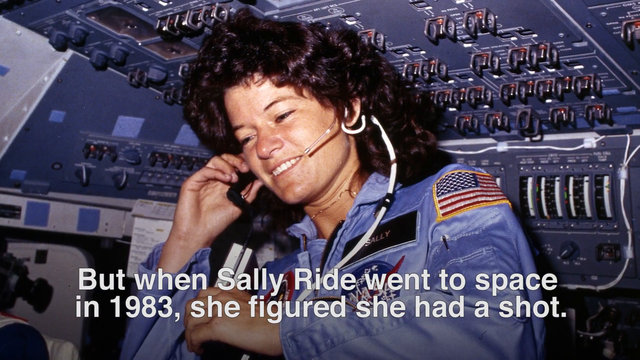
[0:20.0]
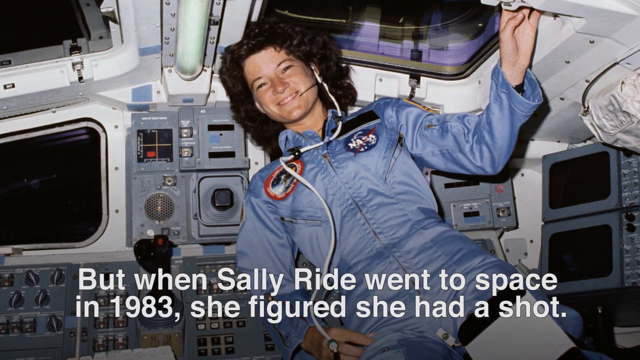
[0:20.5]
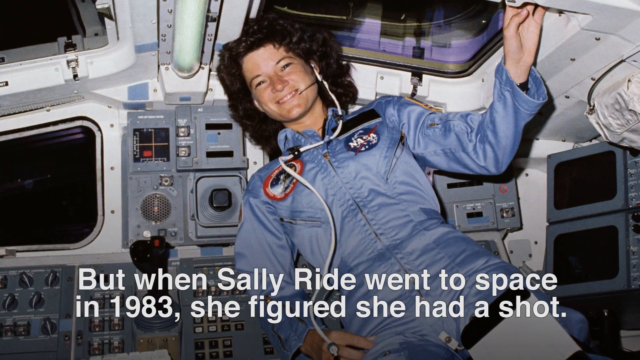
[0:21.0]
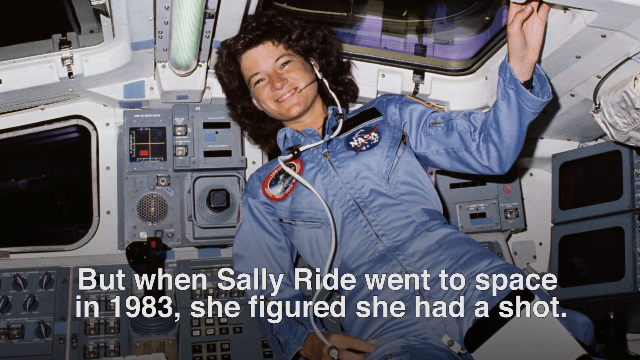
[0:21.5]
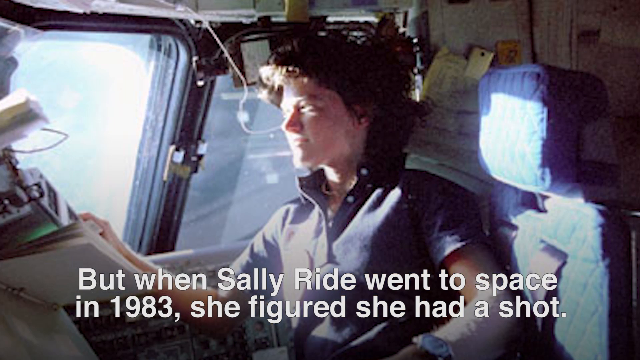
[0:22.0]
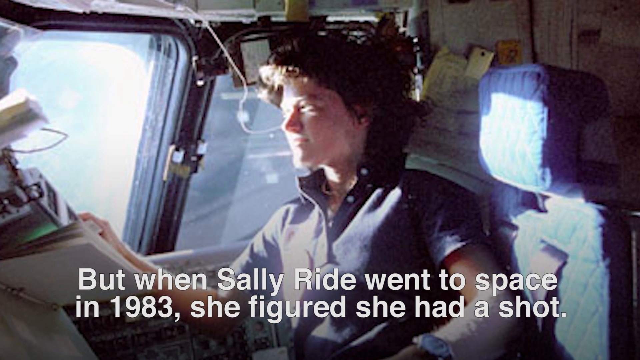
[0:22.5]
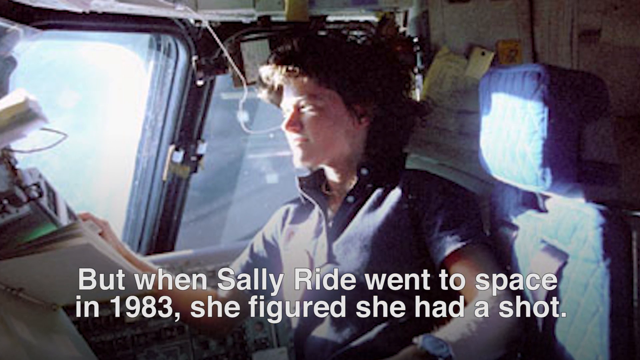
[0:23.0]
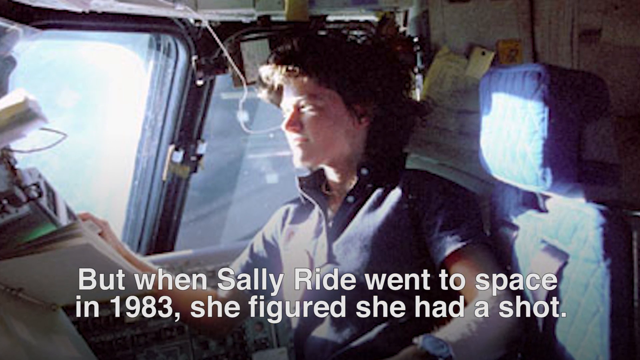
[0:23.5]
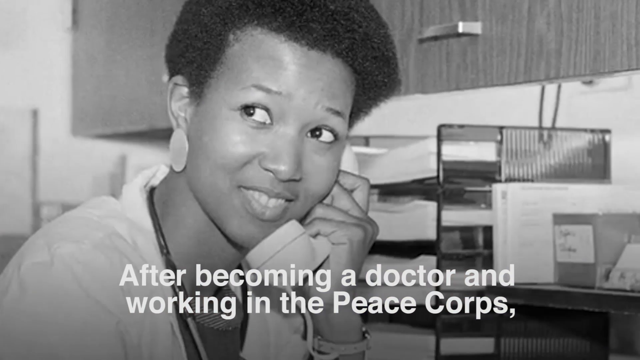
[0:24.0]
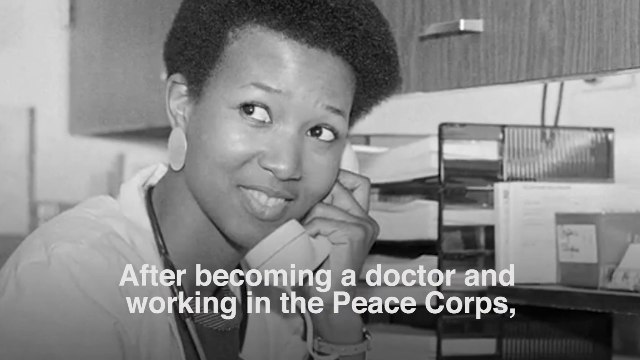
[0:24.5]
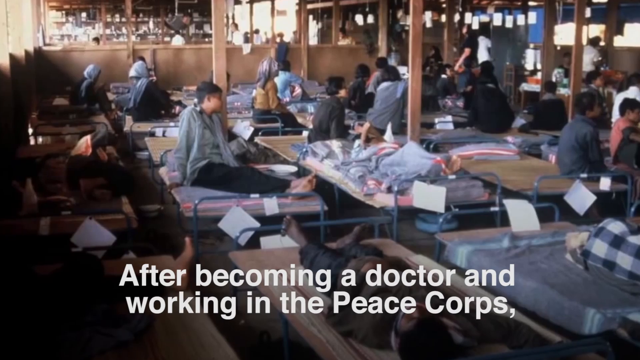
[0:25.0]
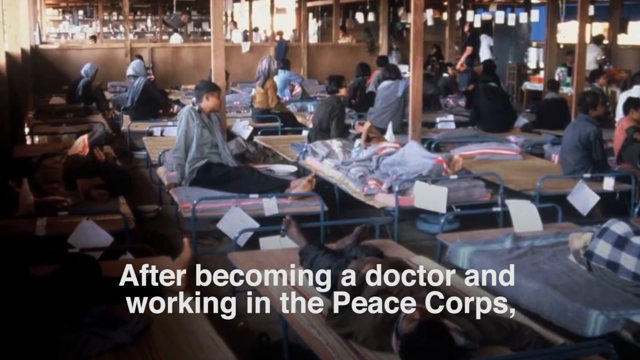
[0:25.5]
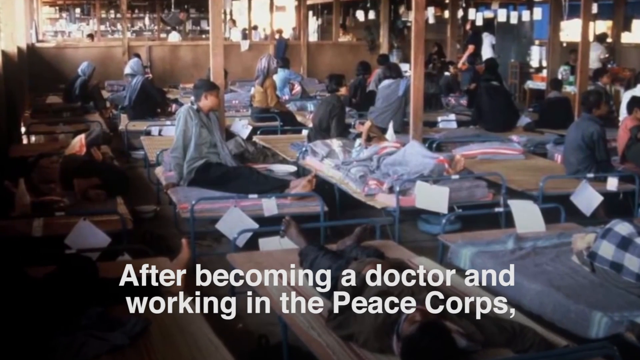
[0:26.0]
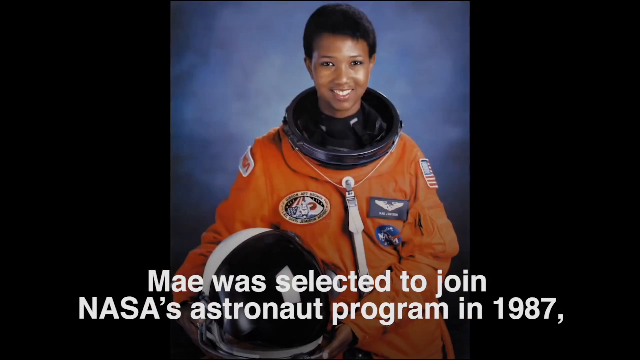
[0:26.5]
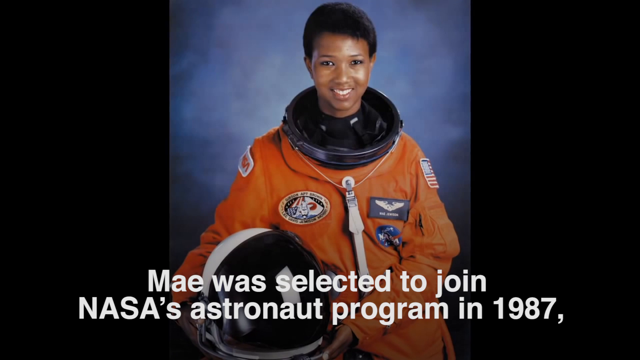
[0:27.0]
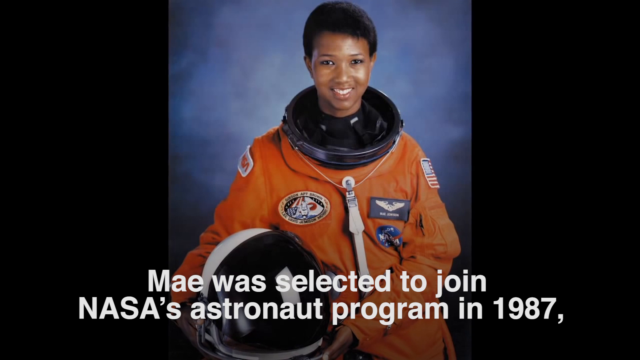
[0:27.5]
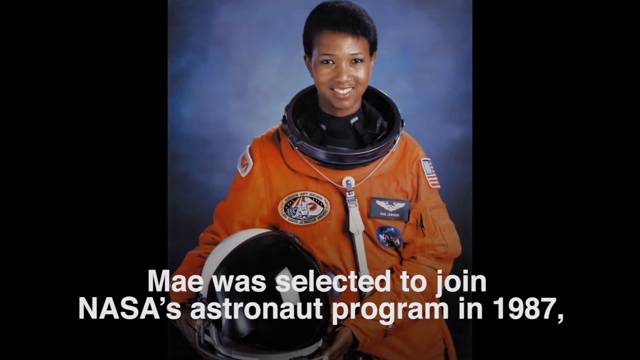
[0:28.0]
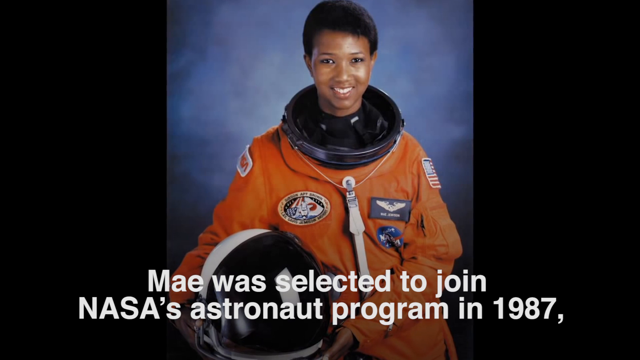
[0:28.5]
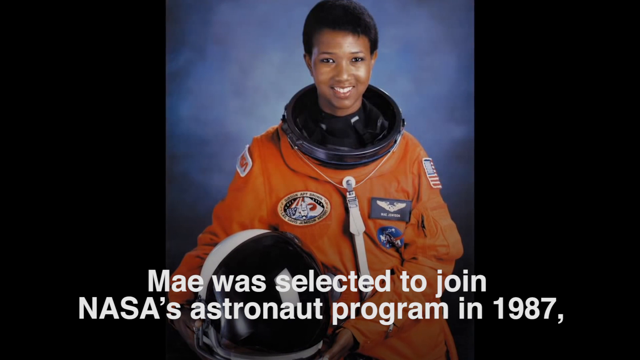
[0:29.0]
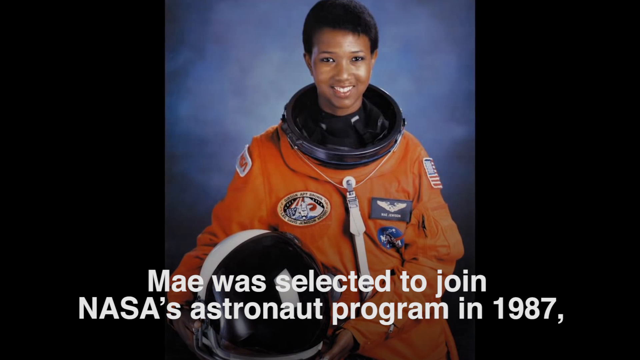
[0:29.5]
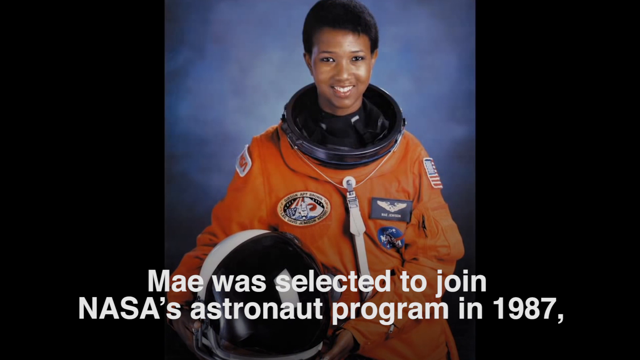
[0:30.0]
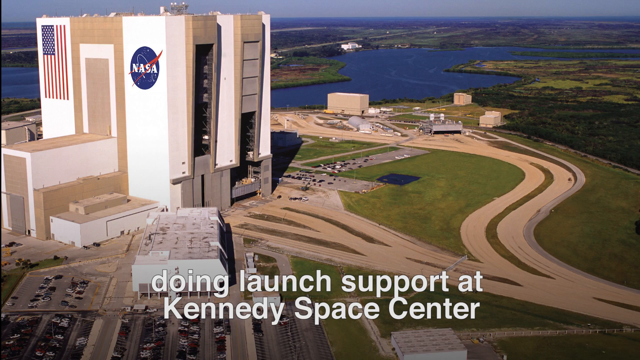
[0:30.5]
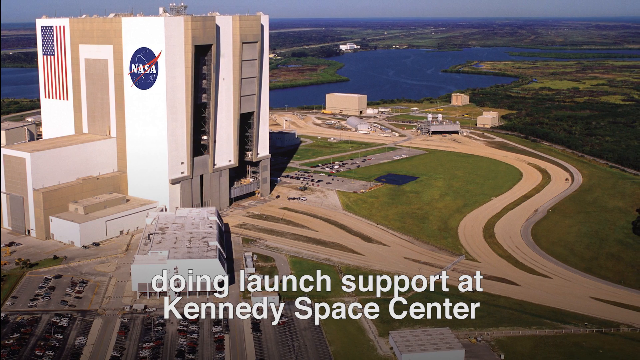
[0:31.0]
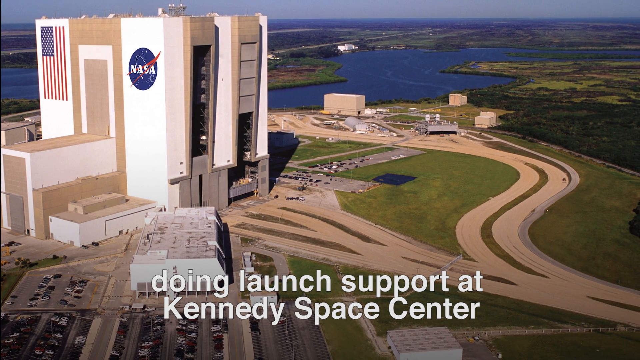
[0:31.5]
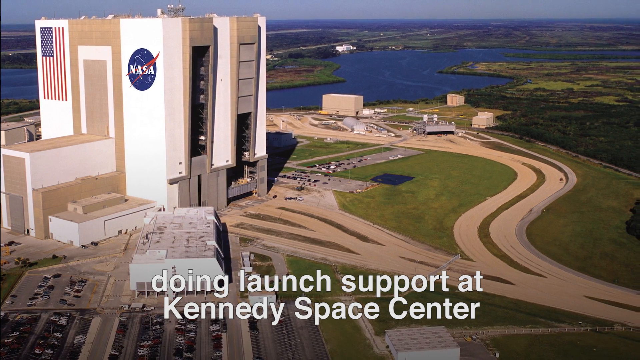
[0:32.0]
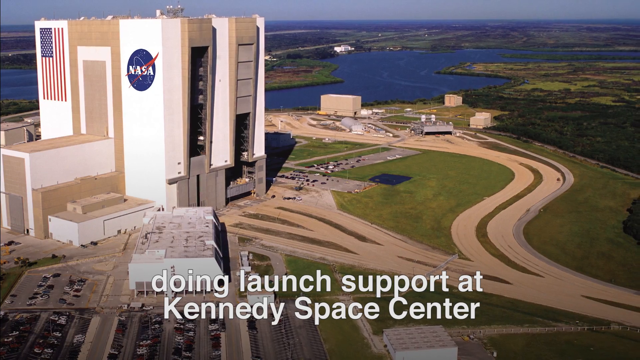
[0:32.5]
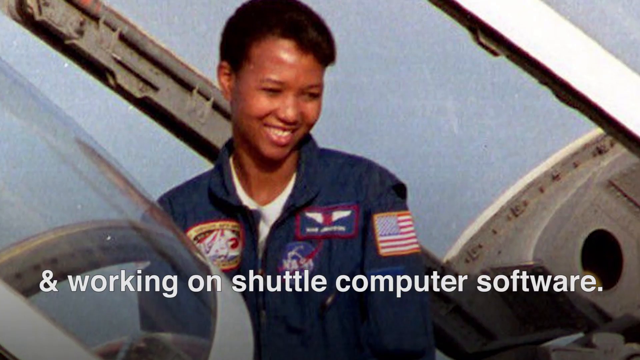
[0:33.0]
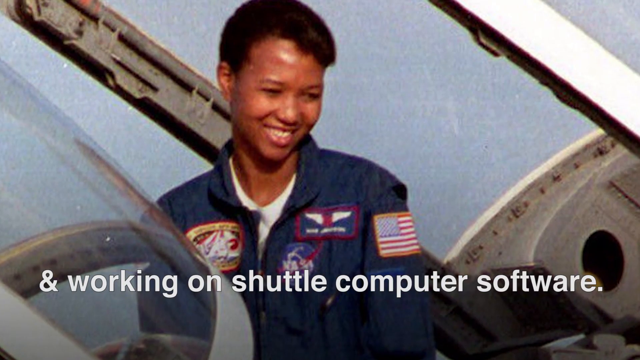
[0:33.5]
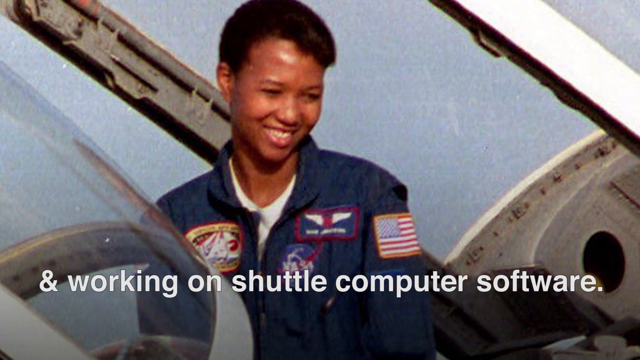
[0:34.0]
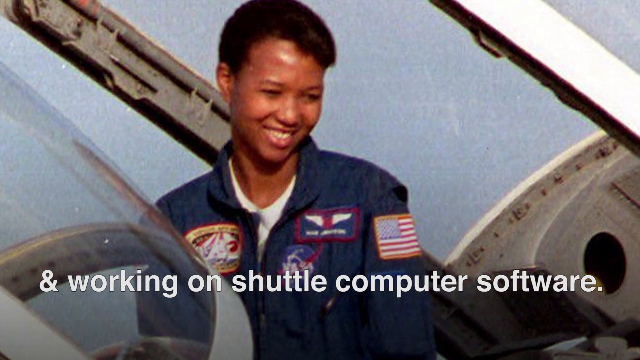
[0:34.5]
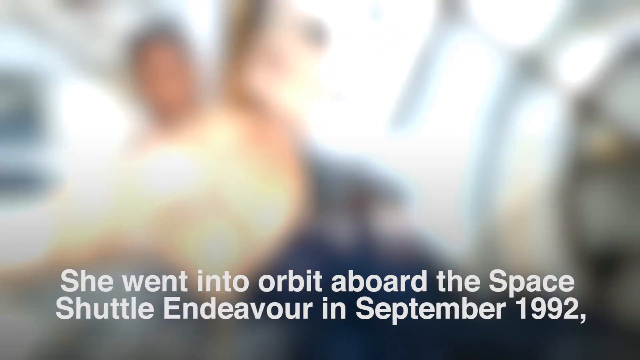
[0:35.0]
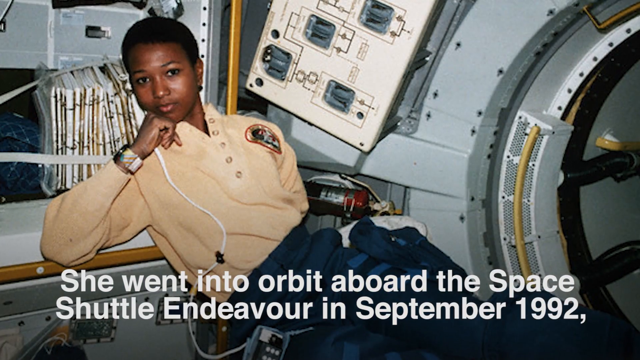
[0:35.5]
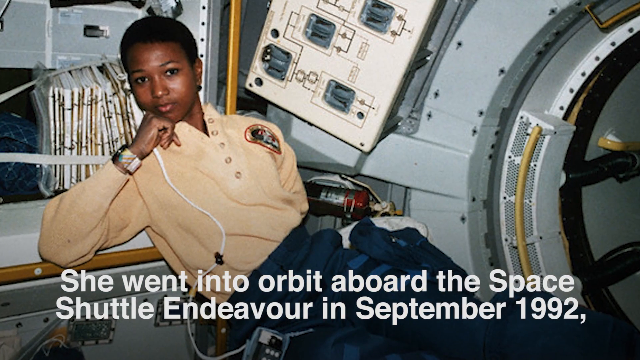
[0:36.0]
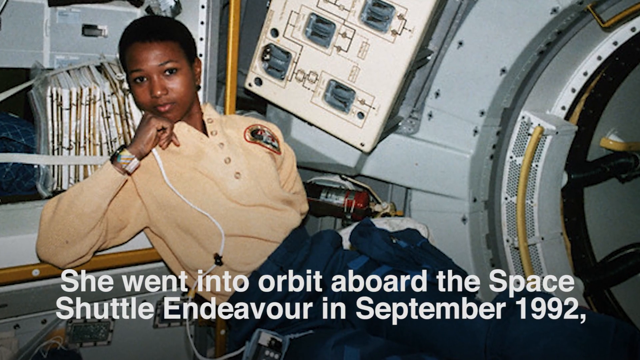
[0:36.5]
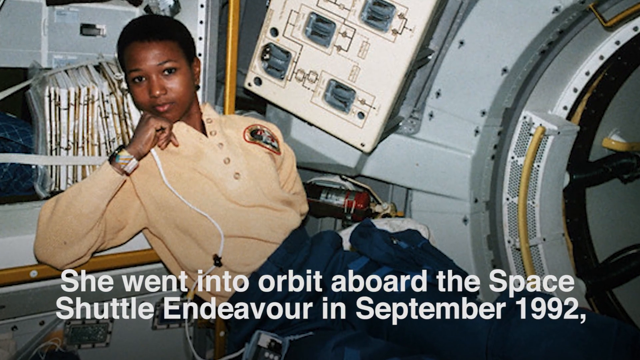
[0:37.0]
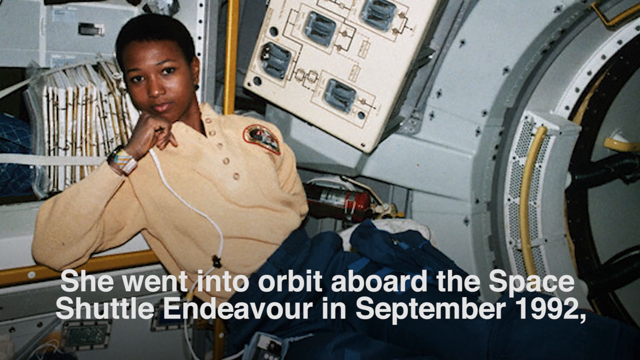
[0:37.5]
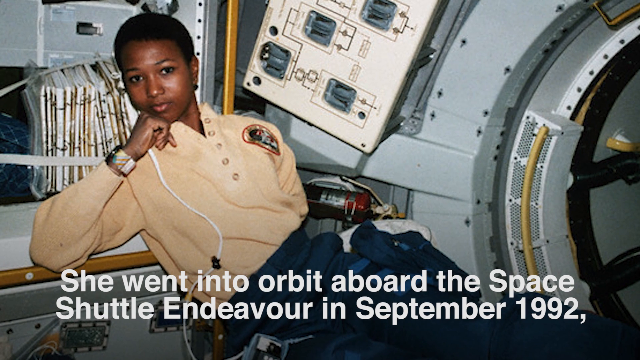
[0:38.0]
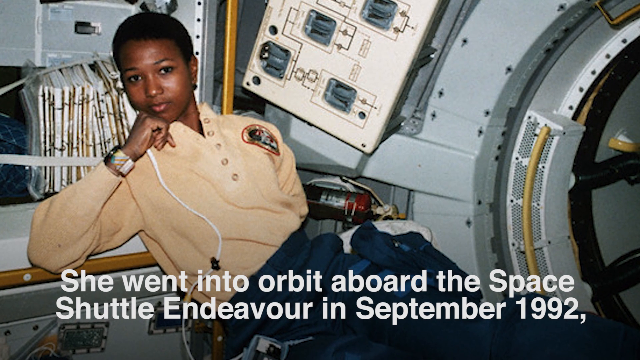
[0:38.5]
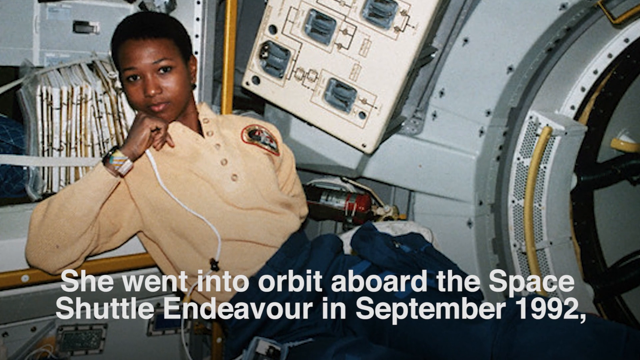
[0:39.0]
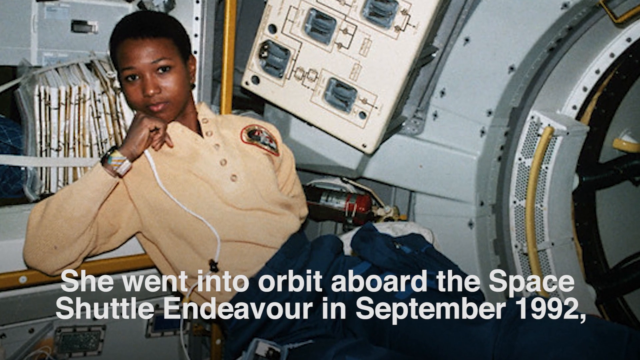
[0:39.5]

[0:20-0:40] The video states that when Shelly Wright went to space in 1983, she figured she had a shot. After becoming a doctor and working in the Peace Corps, May was selected to join NASA's astronaut program in 1986. After doing launch support at Kennedy Space Center and working on shuttle computer software, she went into orbit aboard the space shuttle Endeavour in September 1992, conducting experiments on bone cells, weightlessness and motion sickness.